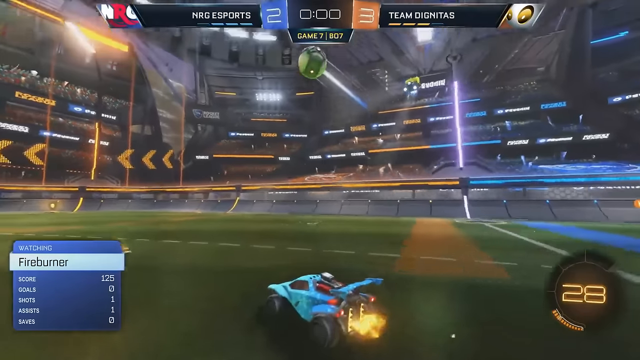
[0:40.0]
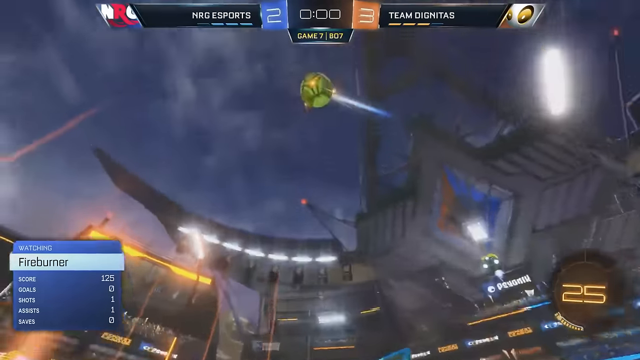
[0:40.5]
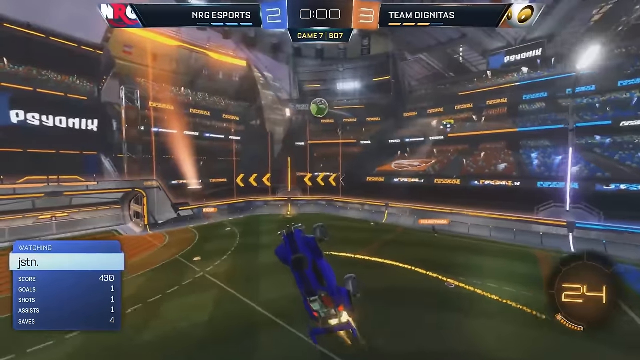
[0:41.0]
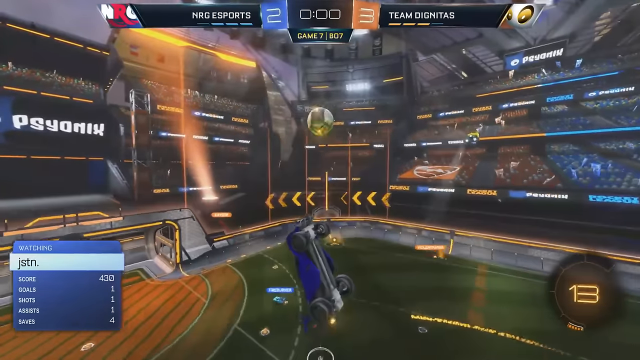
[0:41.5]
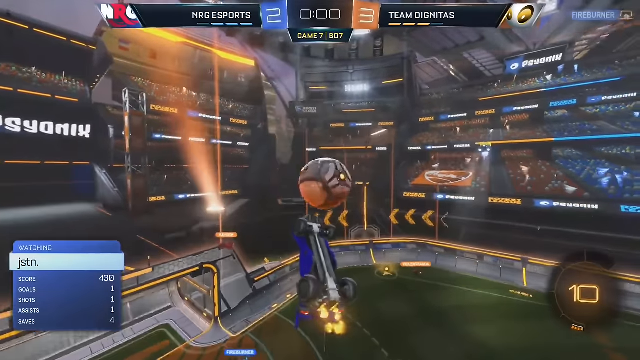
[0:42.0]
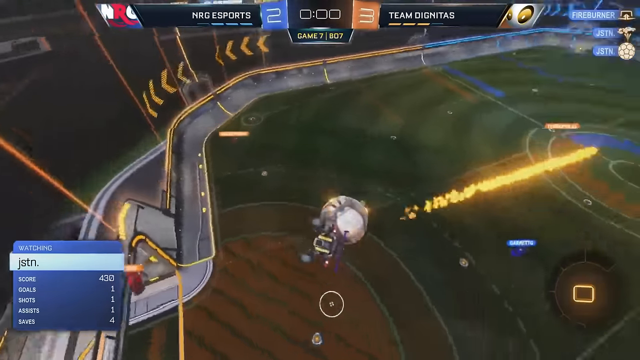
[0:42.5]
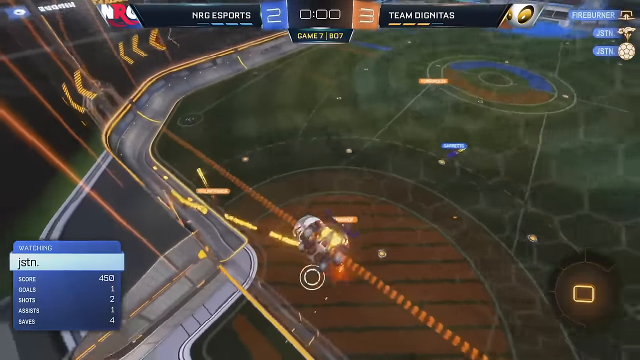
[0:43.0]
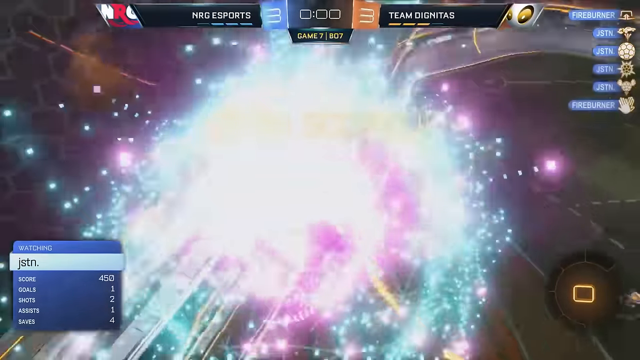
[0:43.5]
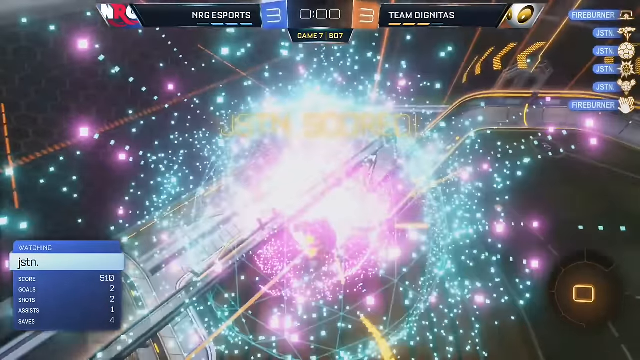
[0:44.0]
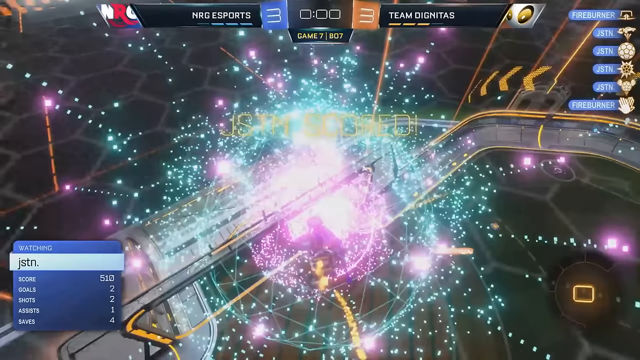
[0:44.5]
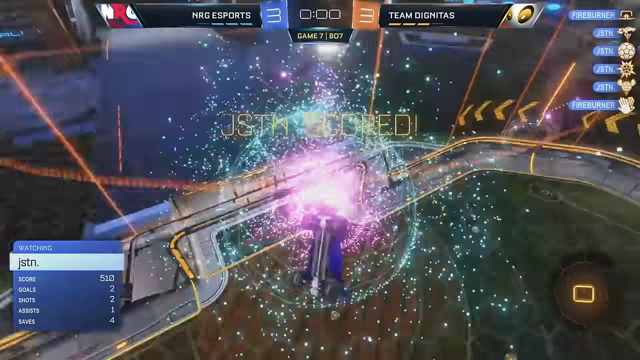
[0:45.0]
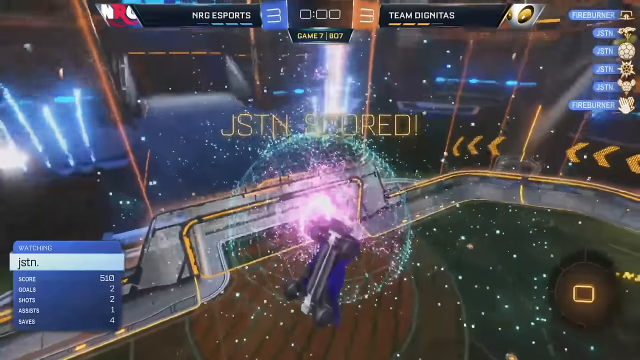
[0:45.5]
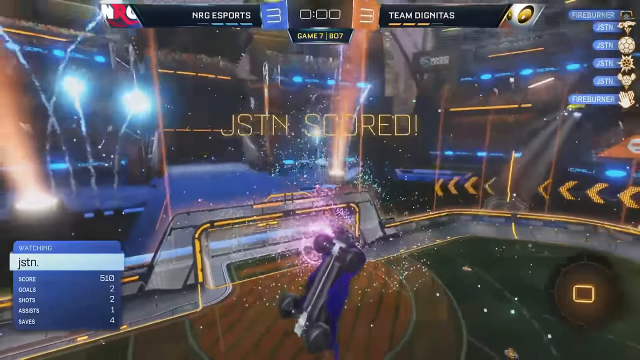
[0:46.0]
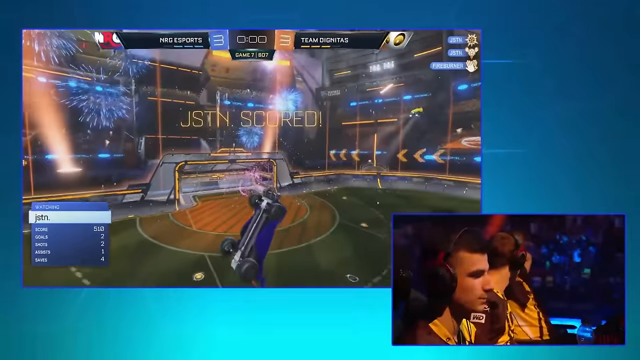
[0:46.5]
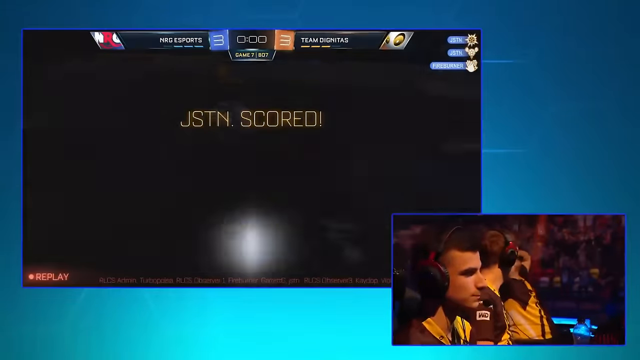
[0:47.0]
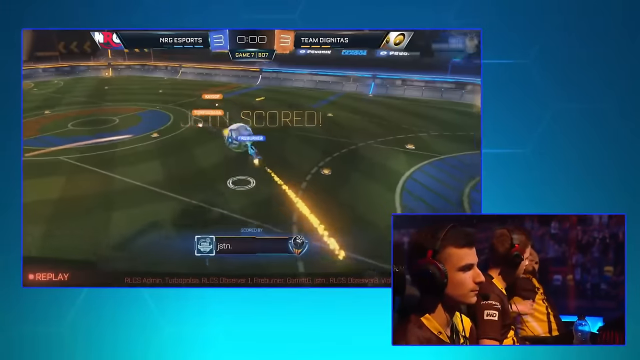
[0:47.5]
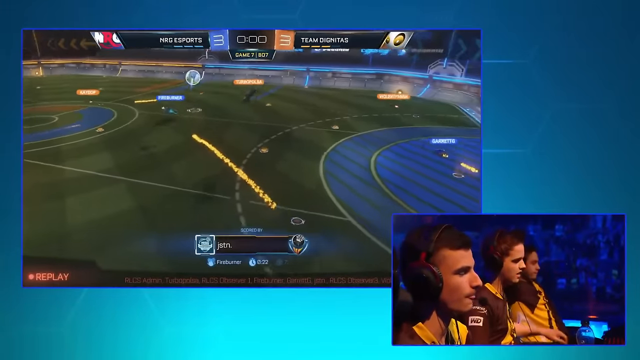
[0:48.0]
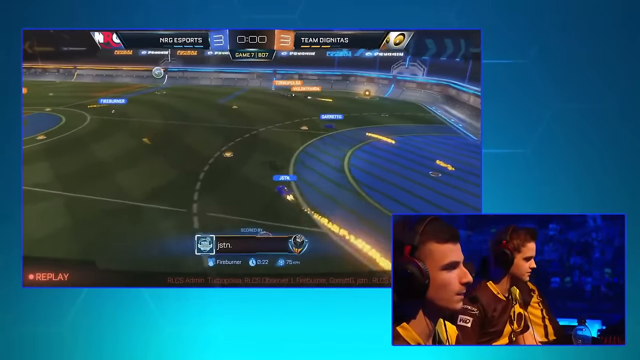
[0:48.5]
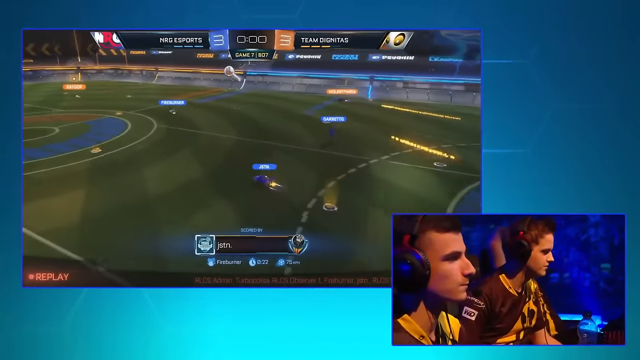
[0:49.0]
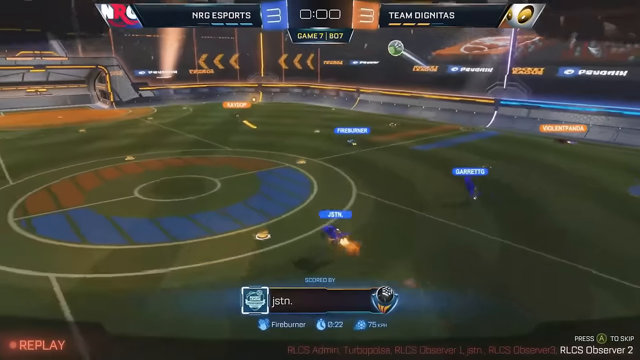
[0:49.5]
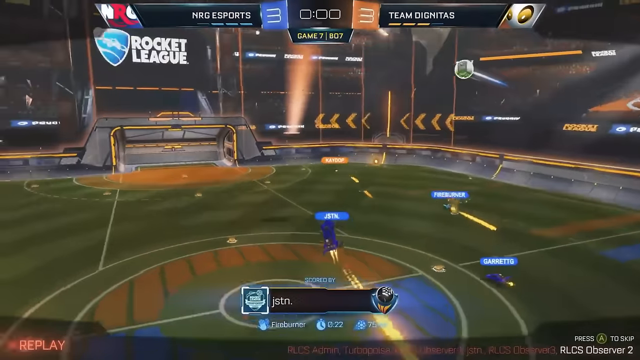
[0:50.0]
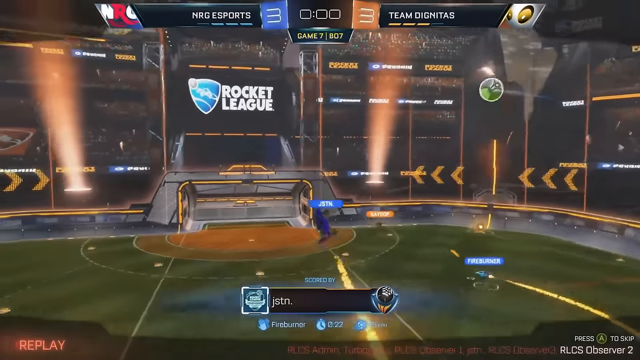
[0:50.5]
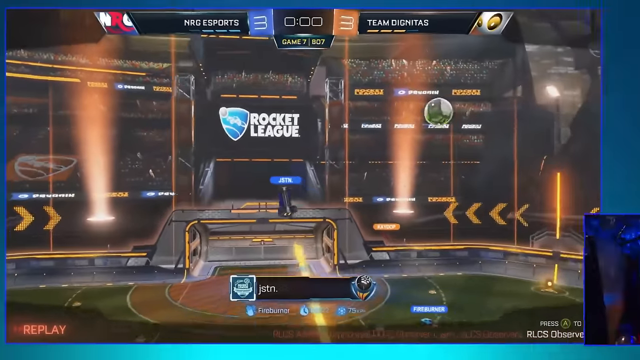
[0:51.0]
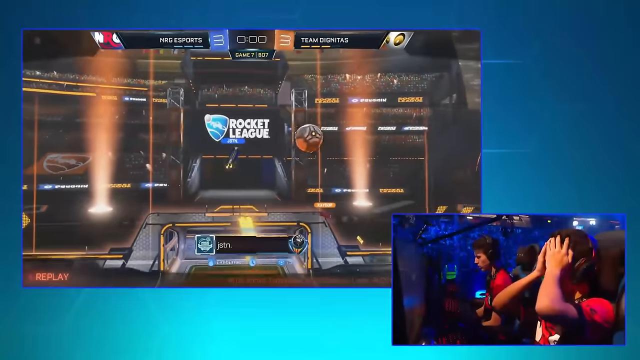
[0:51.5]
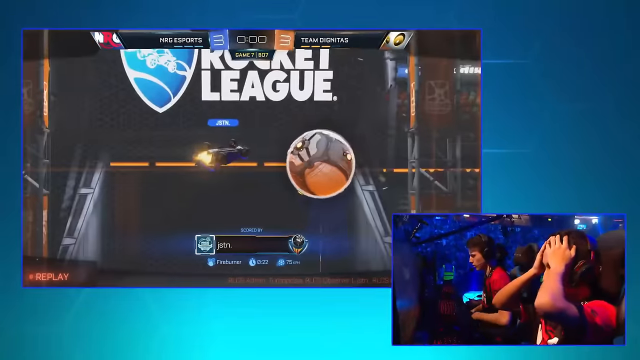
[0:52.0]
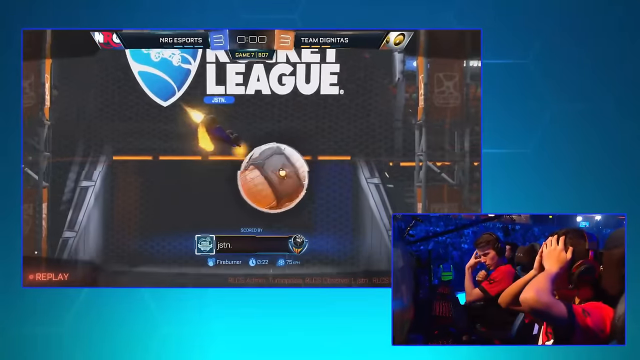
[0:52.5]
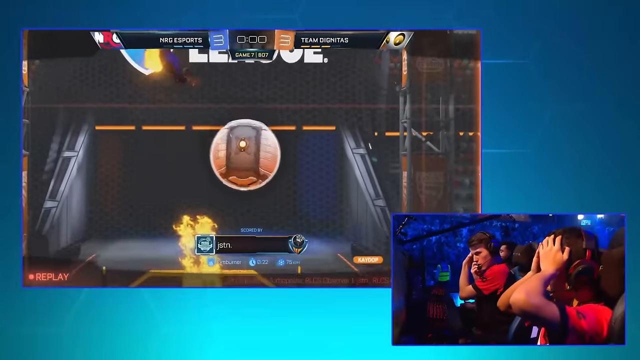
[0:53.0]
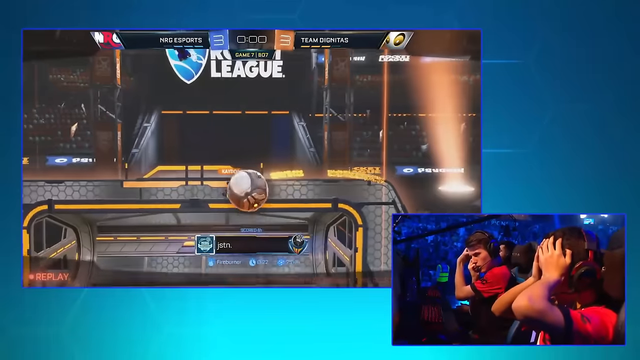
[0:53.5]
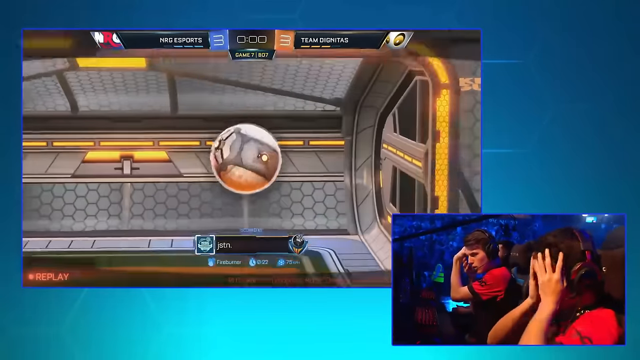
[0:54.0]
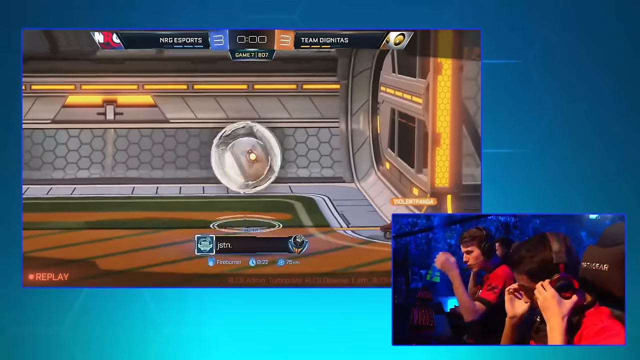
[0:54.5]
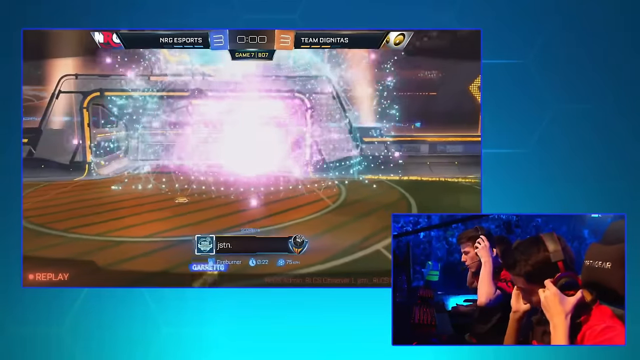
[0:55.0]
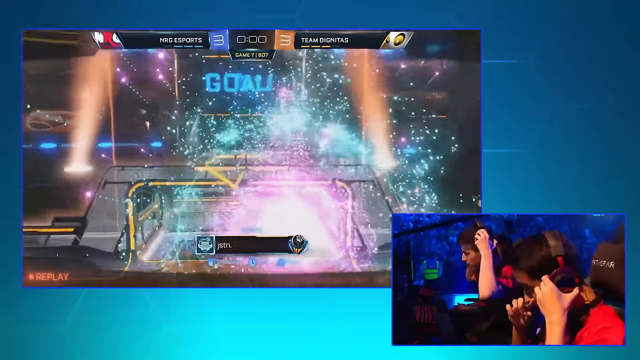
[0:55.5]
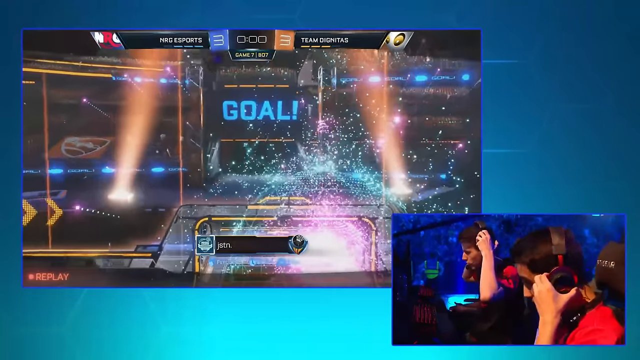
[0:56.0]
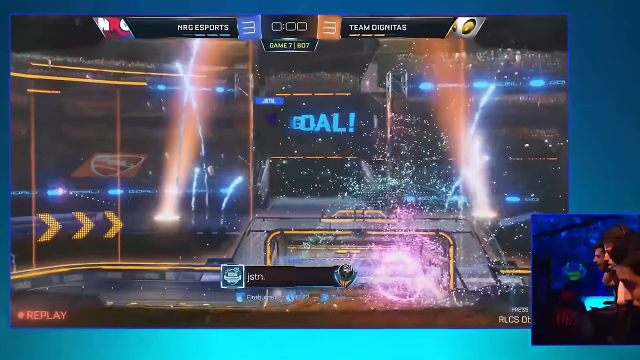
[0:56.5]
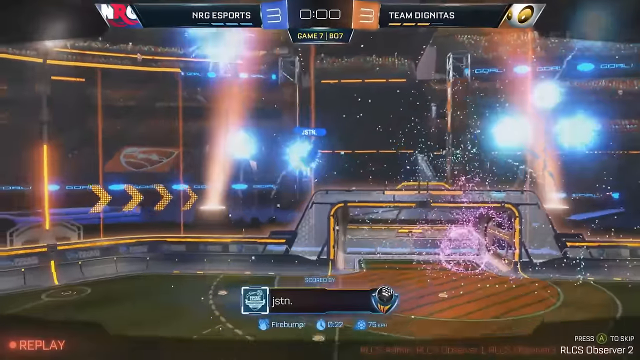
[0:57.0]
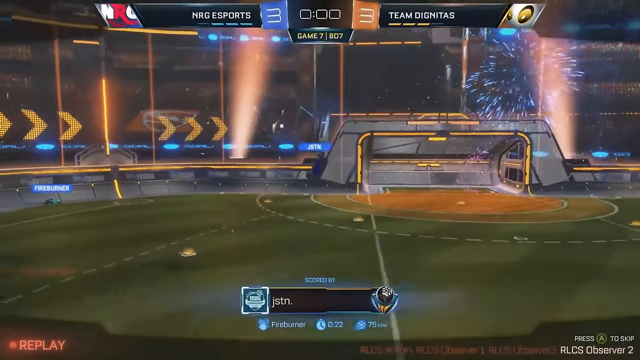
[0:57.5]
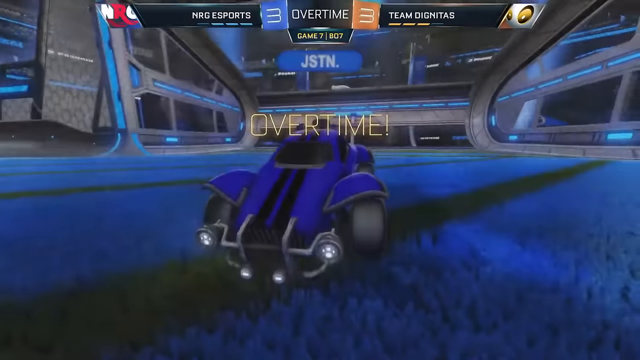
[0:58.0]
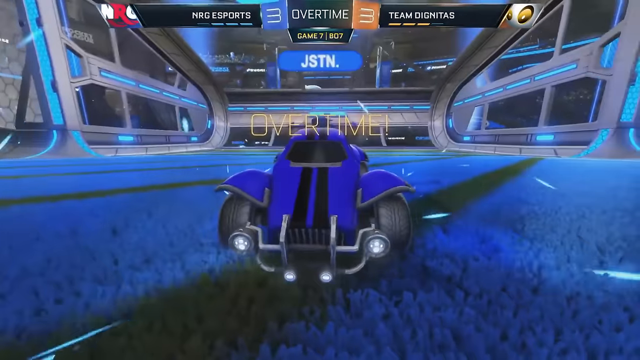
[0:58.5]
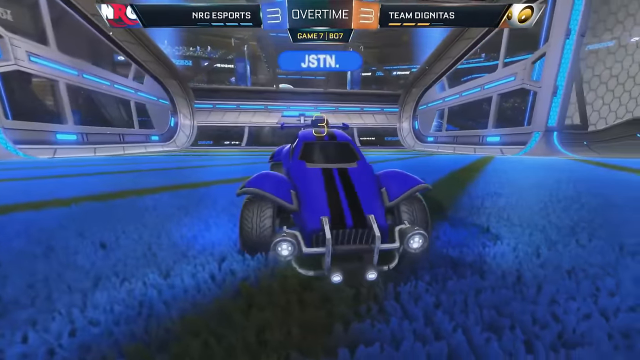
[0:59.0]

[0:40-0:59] On what looks like a futuristic football field in an unidentified video game, a large number of cars chase a glowing ball around. The ball continually bounces into barriers and other cars, and the cars occasionally flip over but then right themselves. A shower of sparks fills the screen and the text "JSTN SCORED" appears. An inset window in the bottom right corner shows what looks like an e-sports team reacting to what is happening on screen. A sign above the playing field says "Rocket League." Next, what looks like a different e-sports team reacts; they adjust their headphones and one of them covers their face. Then there is a shot of a blue car, with "overtime" in block letters above it, apparently indicating that a goal has been scored and the game is going into overtime.